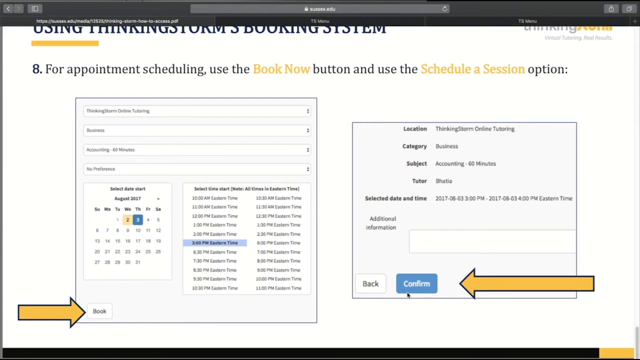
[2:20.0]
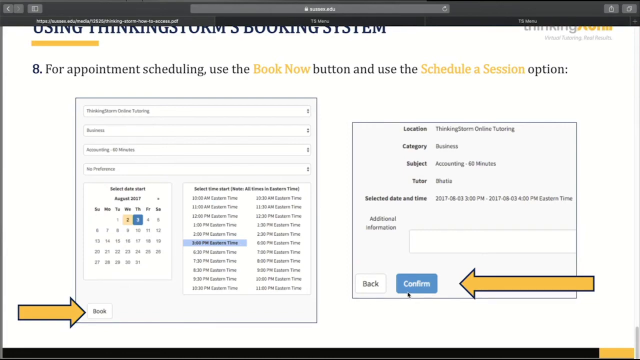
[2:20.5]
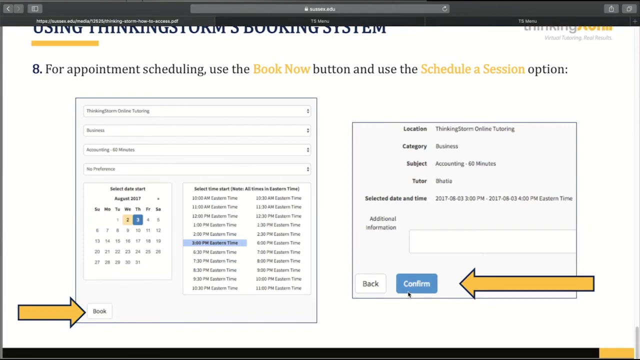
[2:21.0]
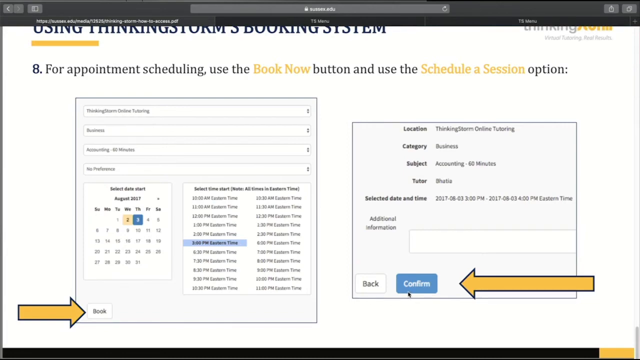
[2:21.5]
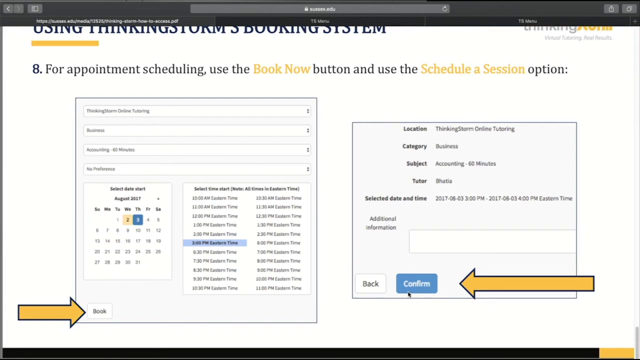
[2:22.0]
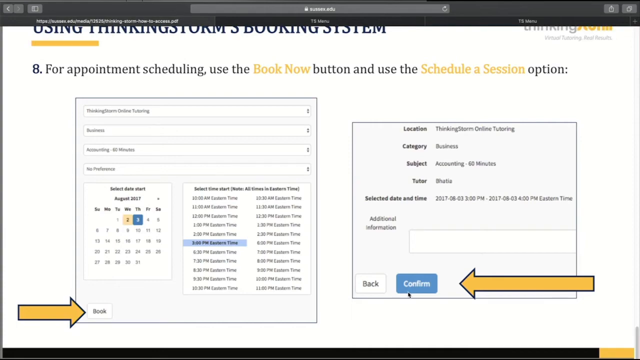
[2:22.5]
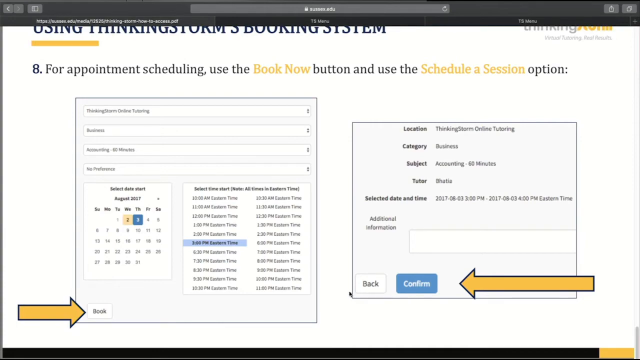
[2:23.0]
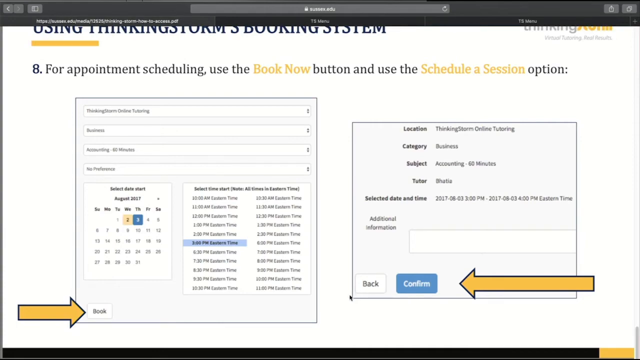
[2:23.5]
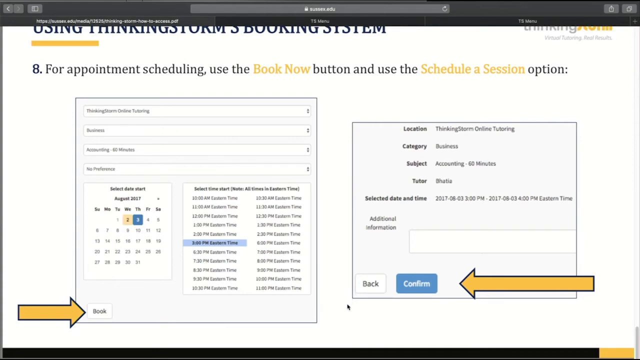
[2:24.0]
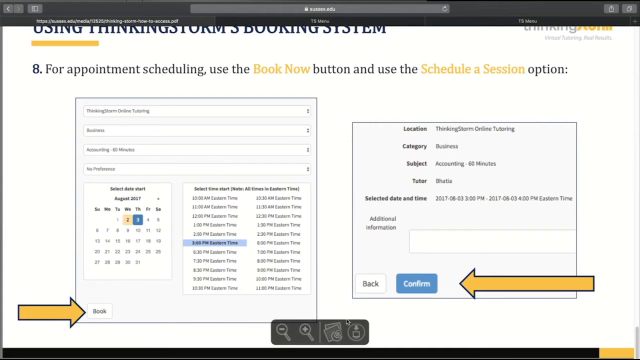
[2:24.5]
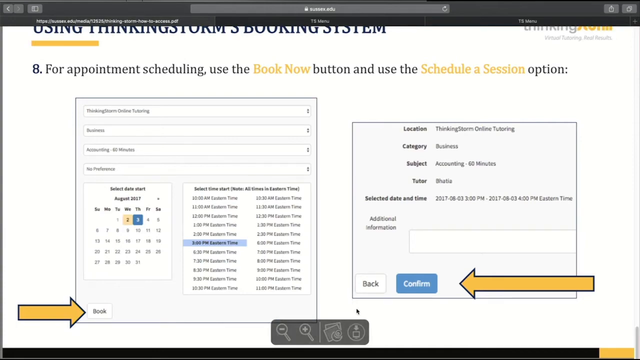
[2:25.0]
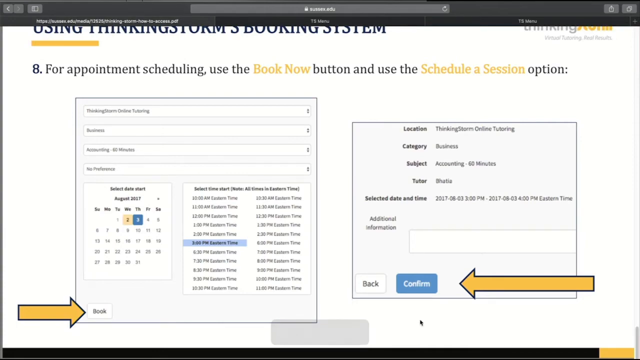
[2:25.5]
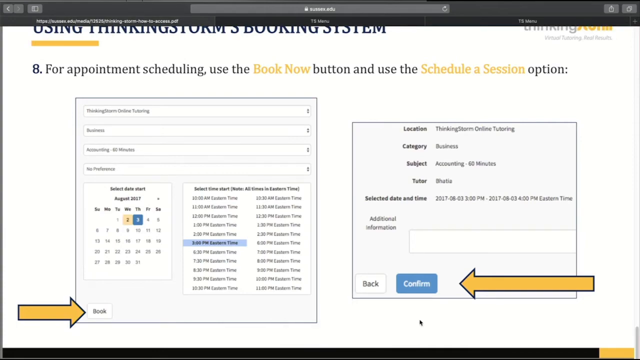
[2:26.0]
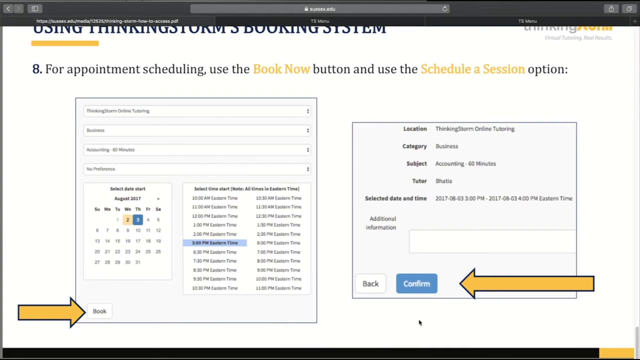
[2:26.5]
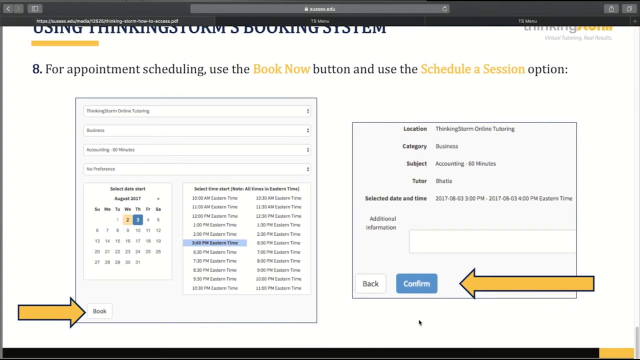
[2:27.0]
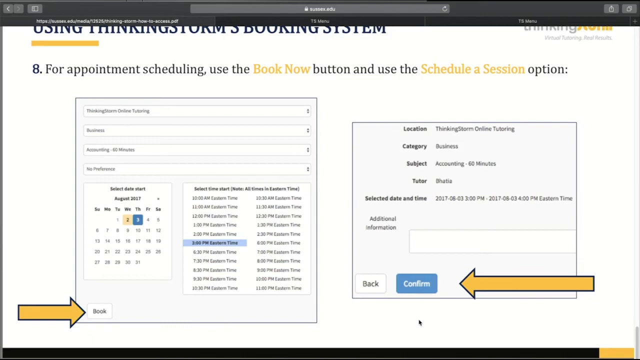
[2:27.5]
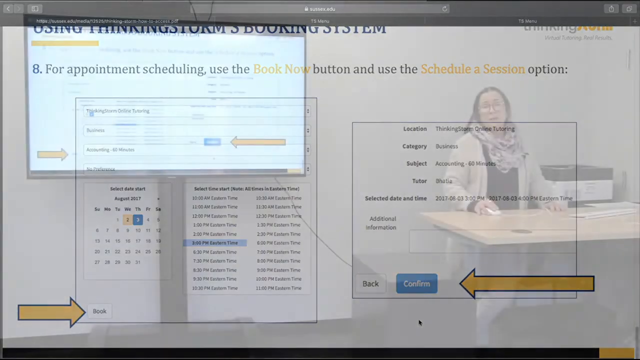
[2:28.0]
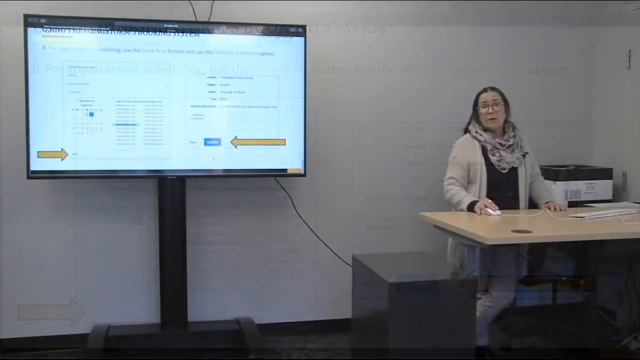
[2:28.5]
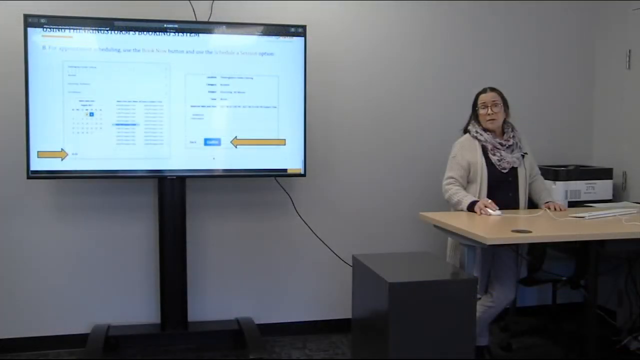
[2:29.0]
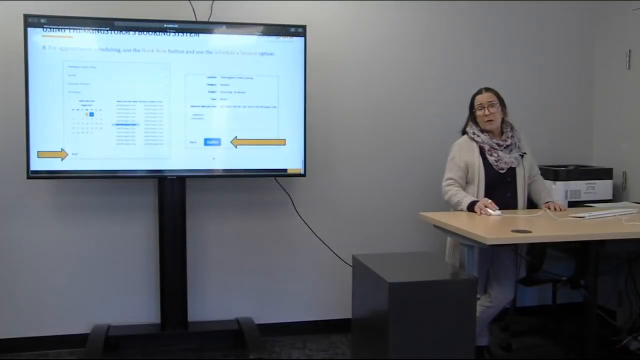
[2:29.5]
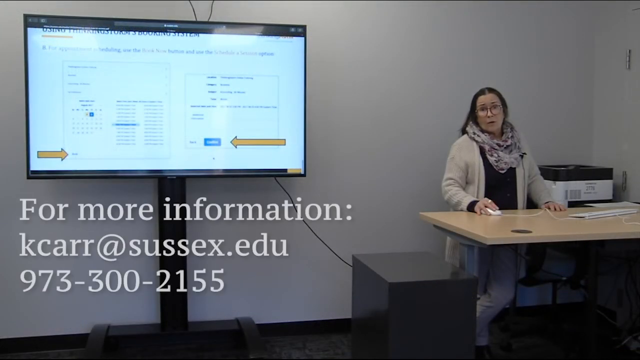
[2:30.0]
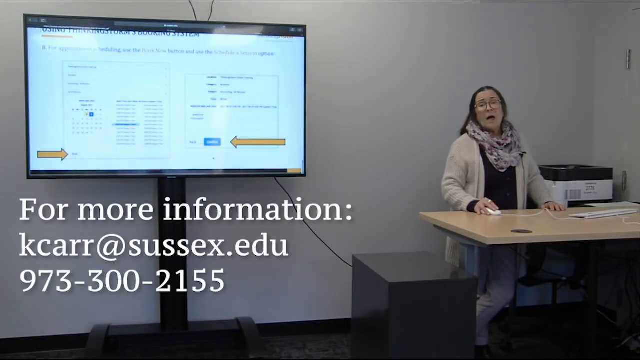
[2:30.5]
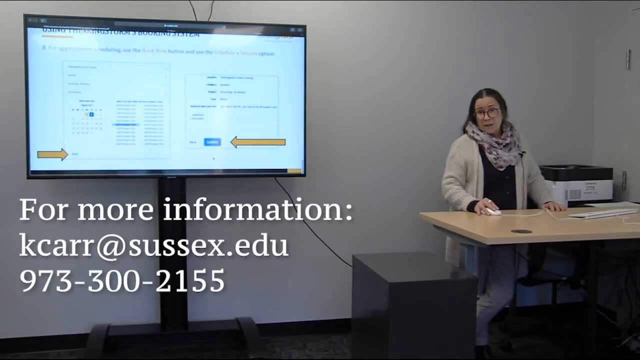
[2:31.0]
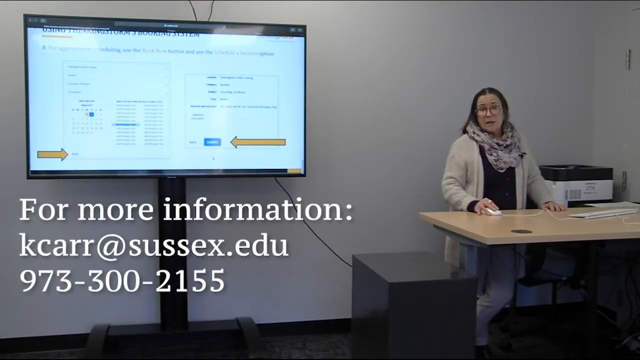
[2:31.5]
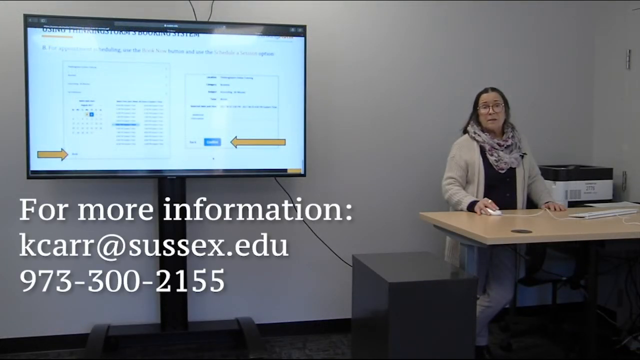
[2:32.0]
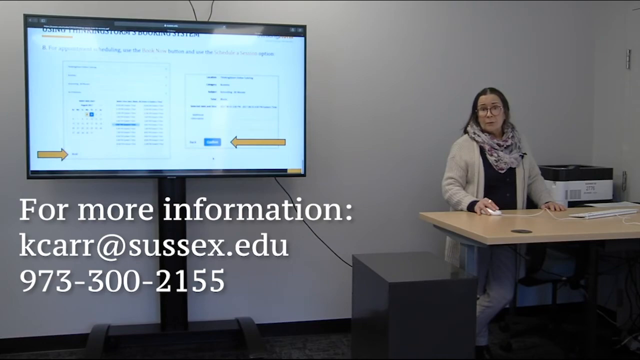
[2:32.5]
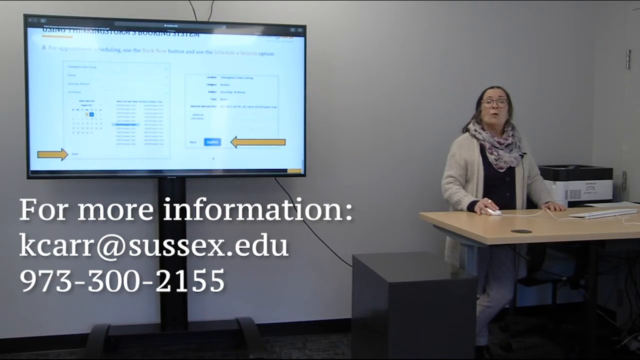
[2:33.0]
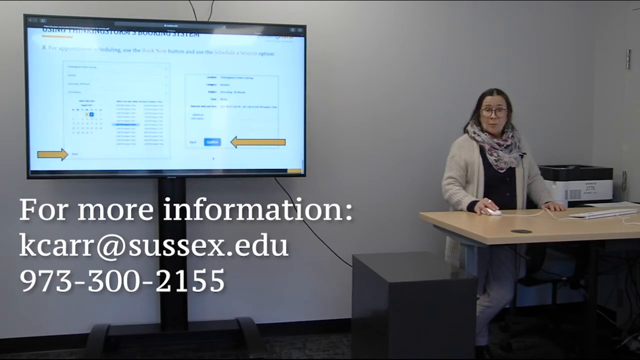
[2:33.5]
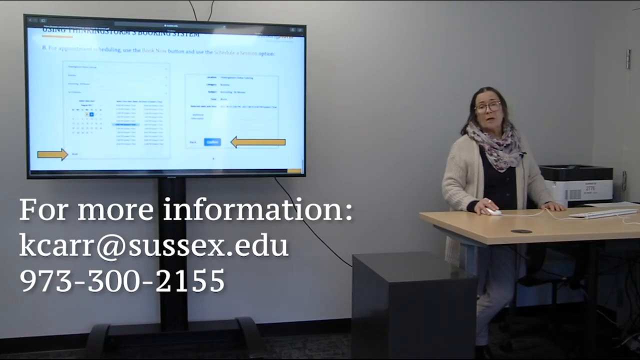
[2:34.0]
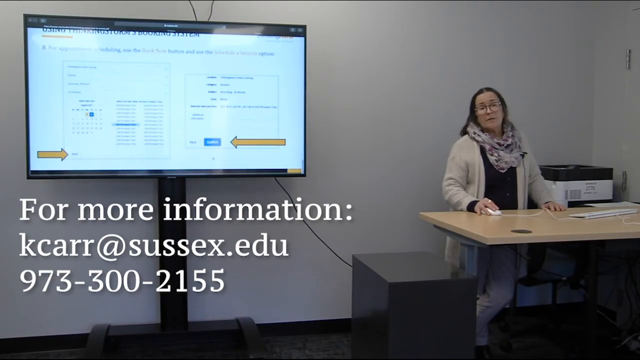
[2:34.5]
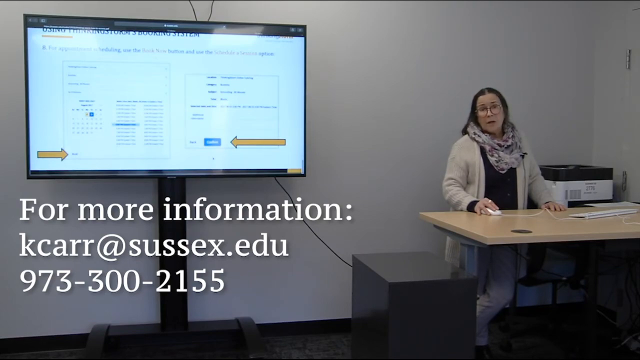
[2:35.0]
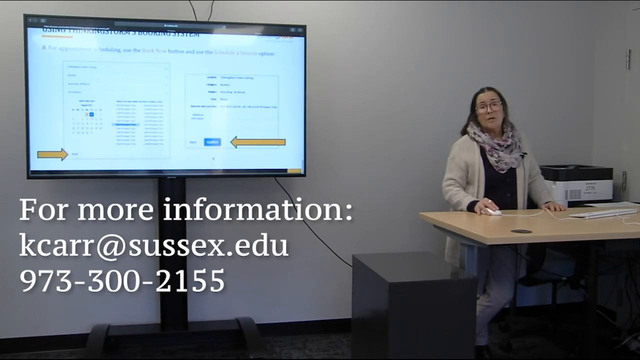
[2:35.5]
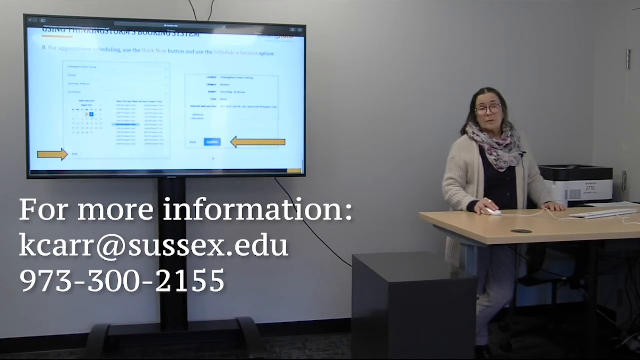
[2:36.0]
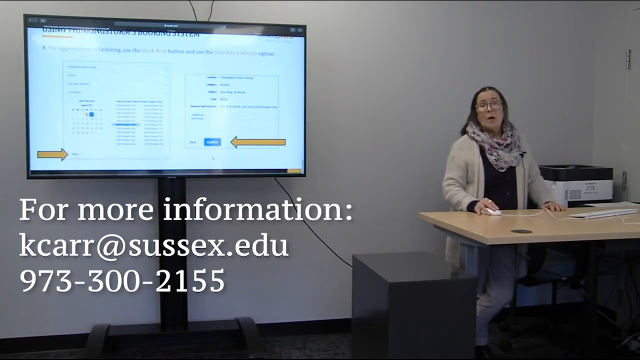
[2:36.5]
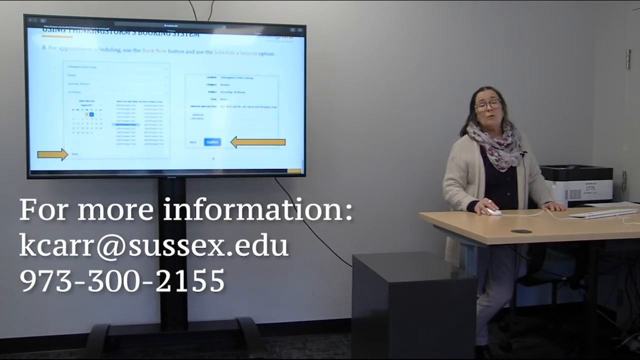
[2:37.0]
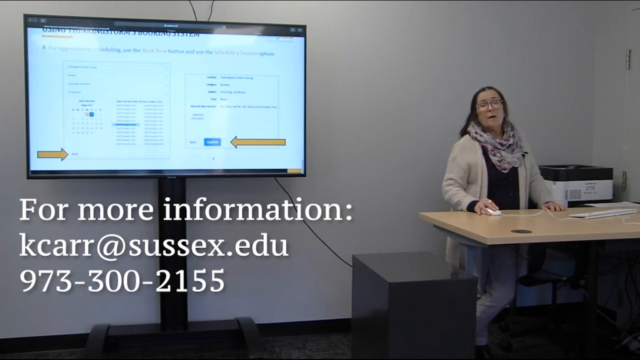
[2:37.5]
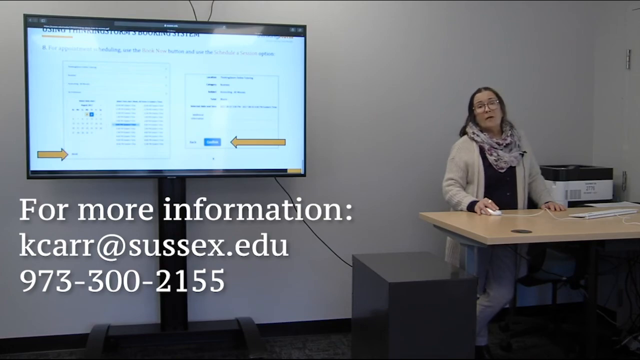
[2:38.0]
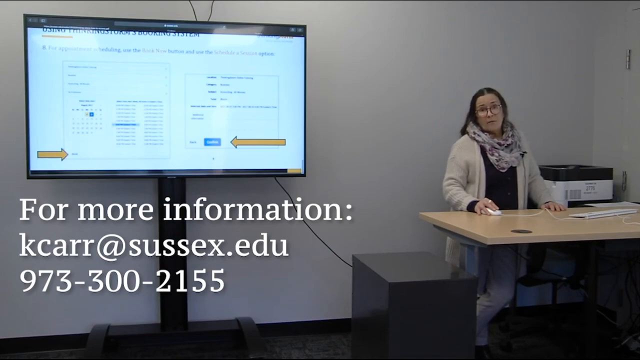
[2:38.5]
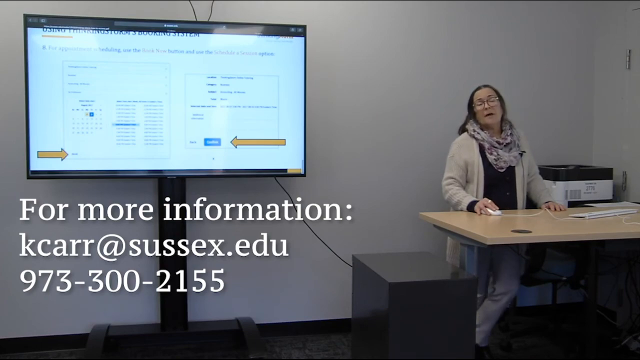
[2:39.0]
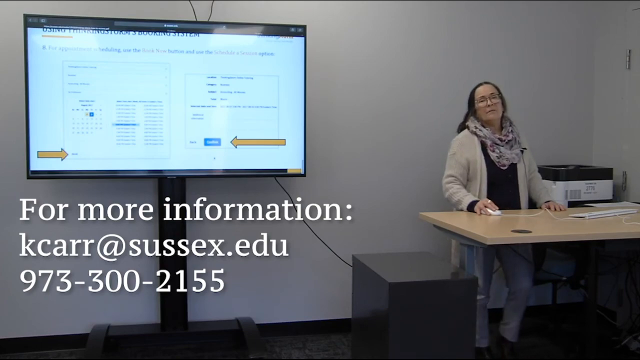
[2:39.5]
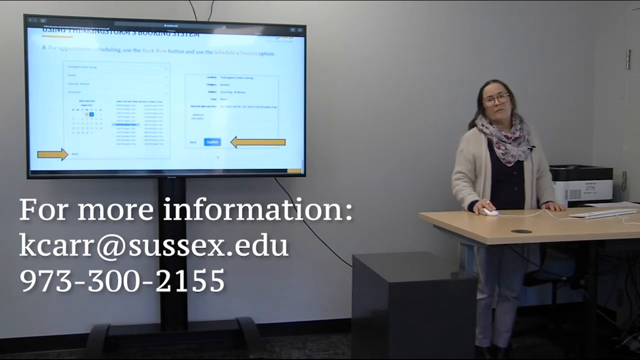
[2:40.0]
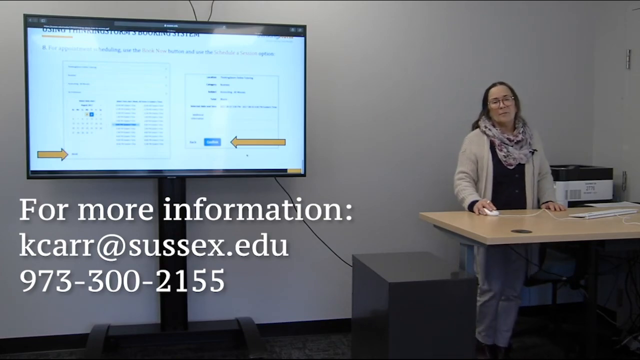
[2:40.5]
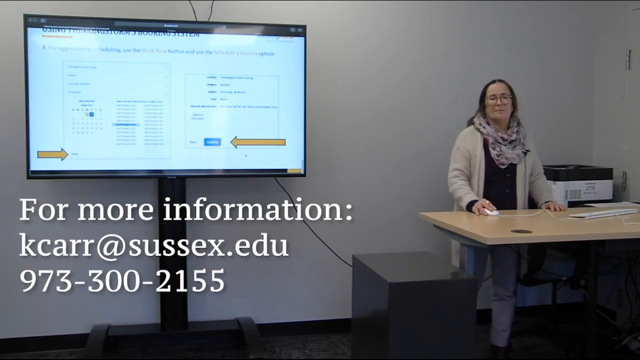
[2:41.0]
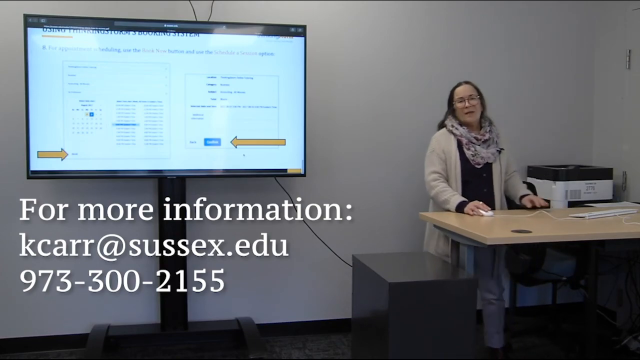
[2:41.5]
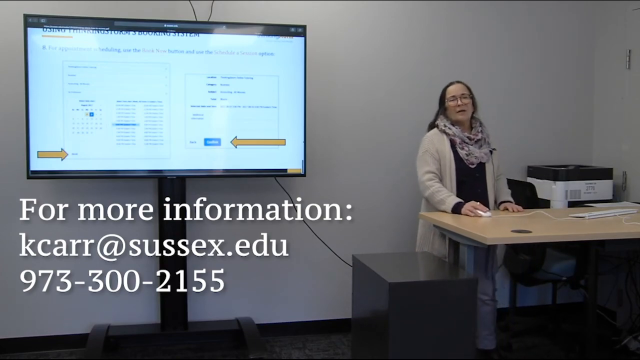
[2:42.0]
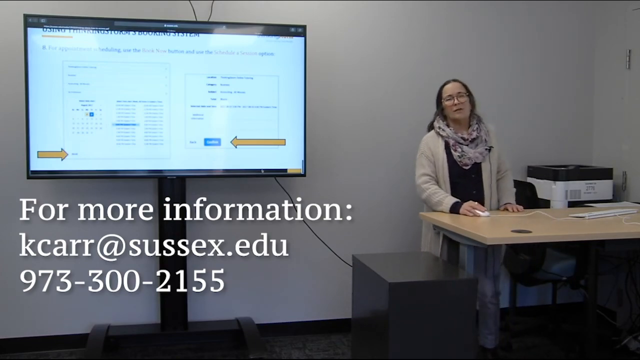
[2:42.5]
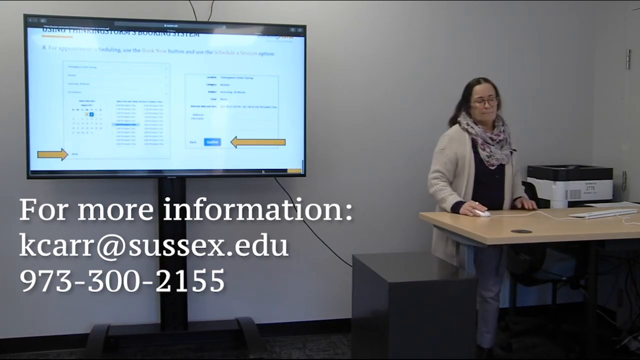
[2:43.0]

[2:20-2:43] Slide 8 of the presentation explains appointment scheduling using the "Book Now" button and the Schedule Session option, with day, month and hour clearly shown as choices. After clicking "Book", the user confirms the subject category, tutor, selected date and time, and location, then clicks "Confirm". The screen fades to a college classroom where a lady, probably a college professor, is on the right. She wears a gray scarf with some kind of pattern, a beige sweater (possibly not a sweater; it is not clearly visible) with a black shirt underneath, and jeans. She stands in front of a table holding a mouse in her right hand, with a keyboard in front of her. Behind her on the right is some kind of printer, maybe just a box. To her left, a screen shows what was displayed a few seconds earlier. Contact information for her is shown, including her email and telephone number.